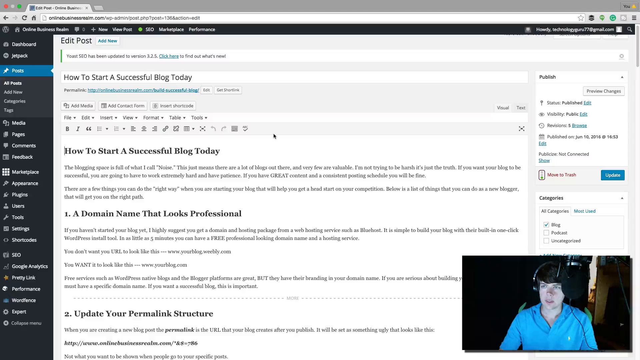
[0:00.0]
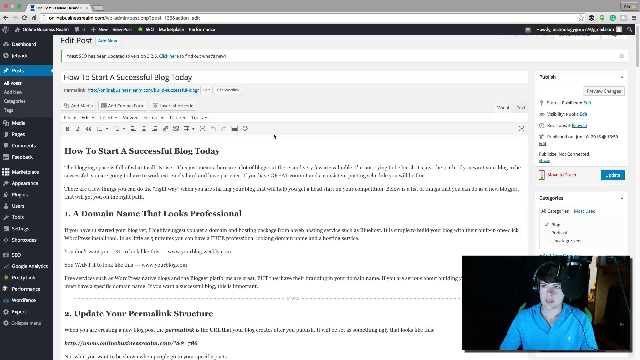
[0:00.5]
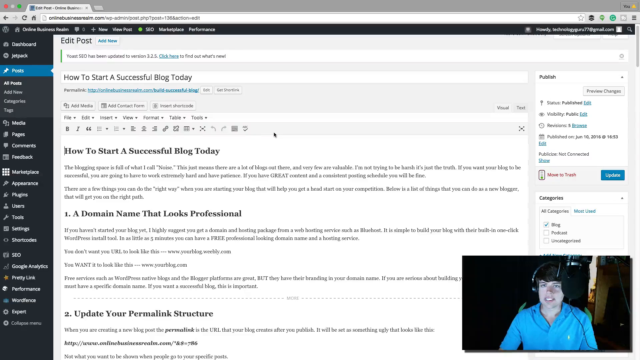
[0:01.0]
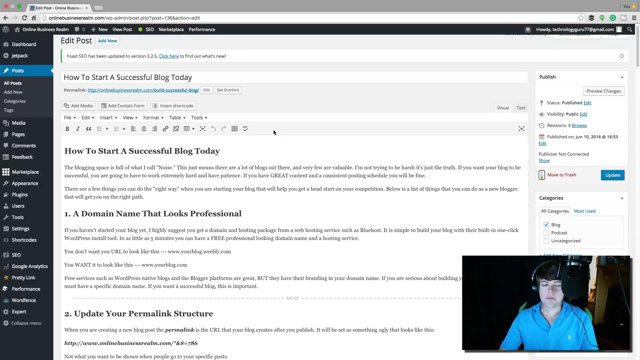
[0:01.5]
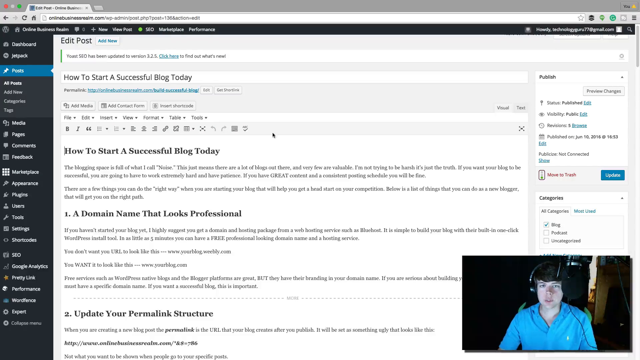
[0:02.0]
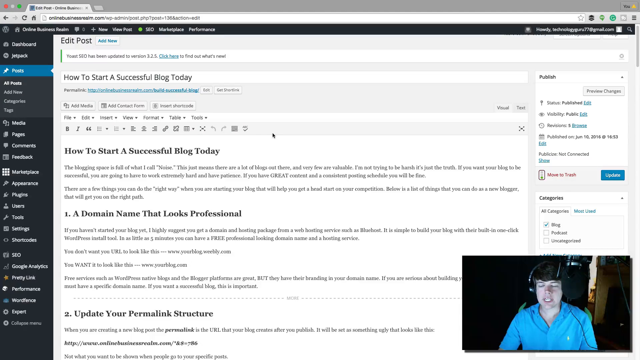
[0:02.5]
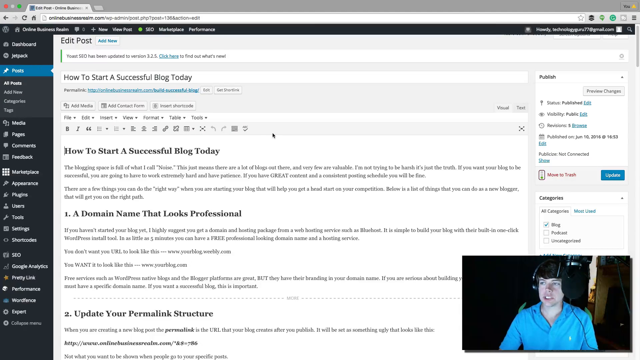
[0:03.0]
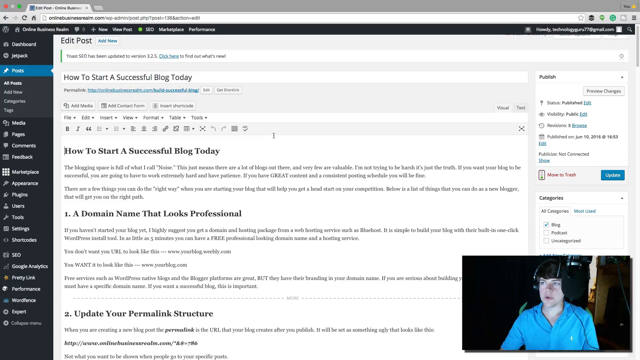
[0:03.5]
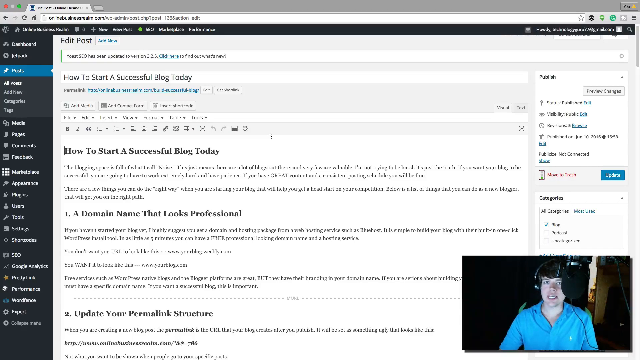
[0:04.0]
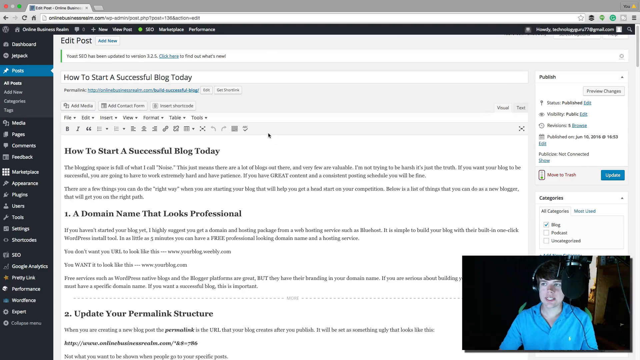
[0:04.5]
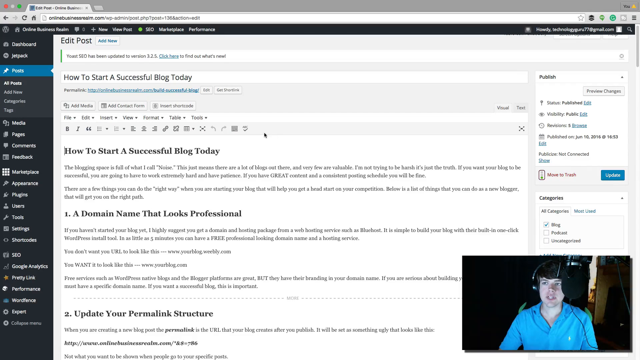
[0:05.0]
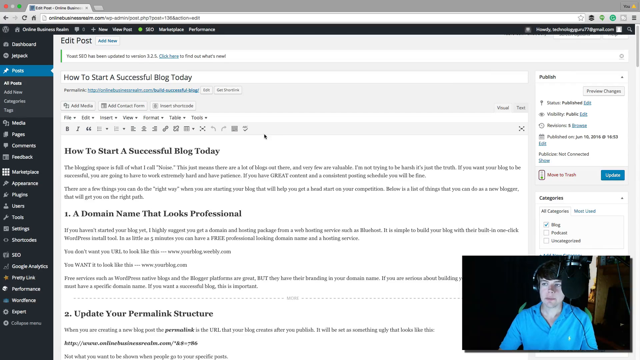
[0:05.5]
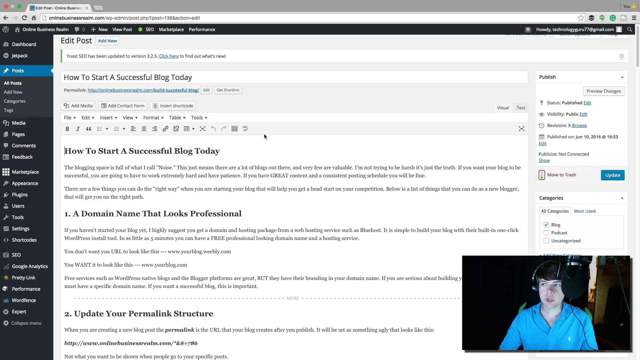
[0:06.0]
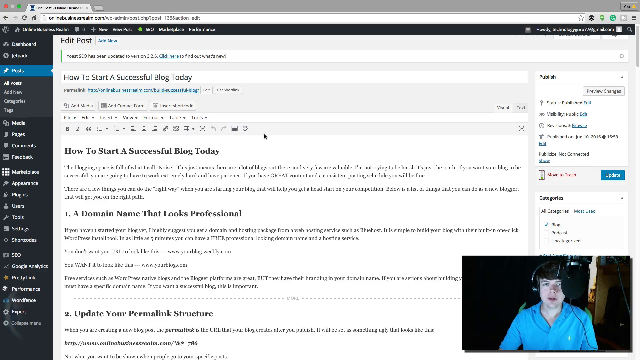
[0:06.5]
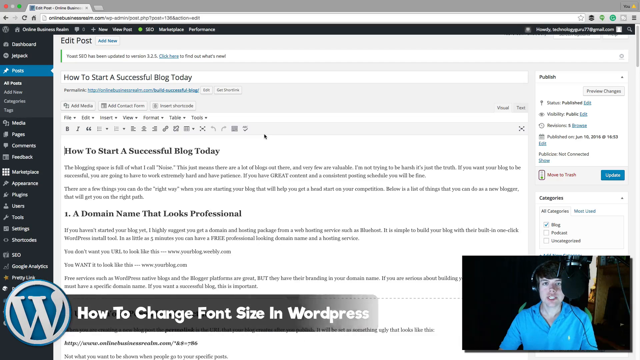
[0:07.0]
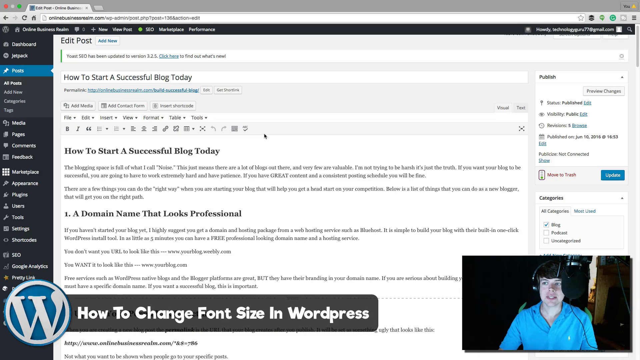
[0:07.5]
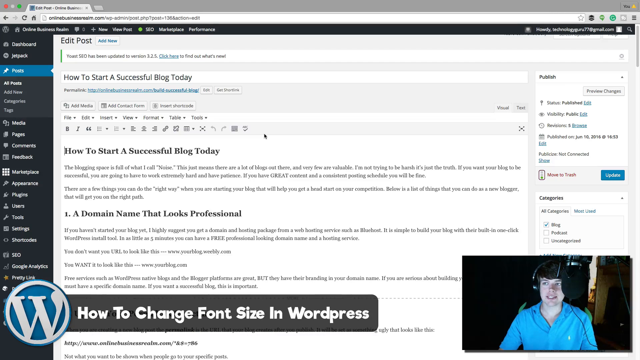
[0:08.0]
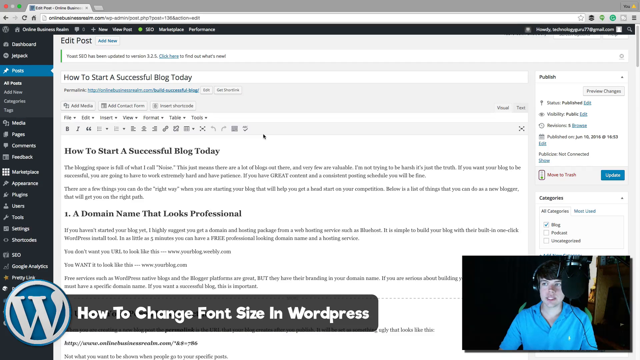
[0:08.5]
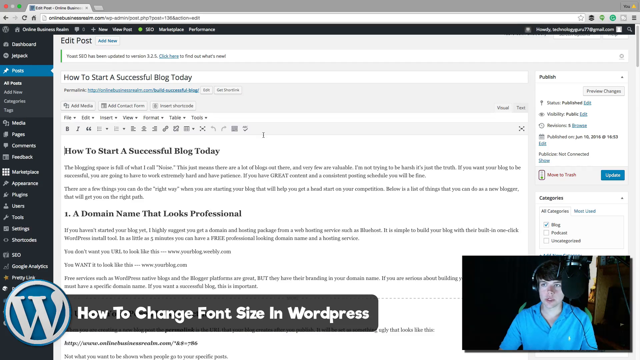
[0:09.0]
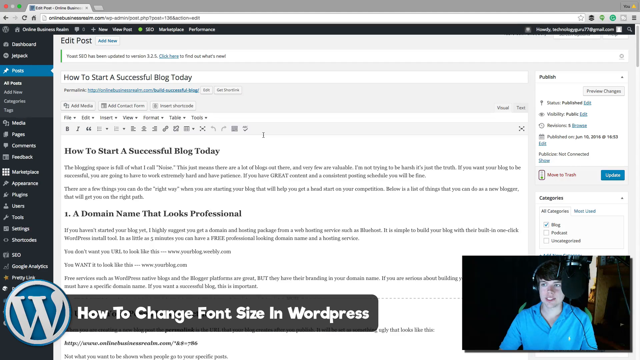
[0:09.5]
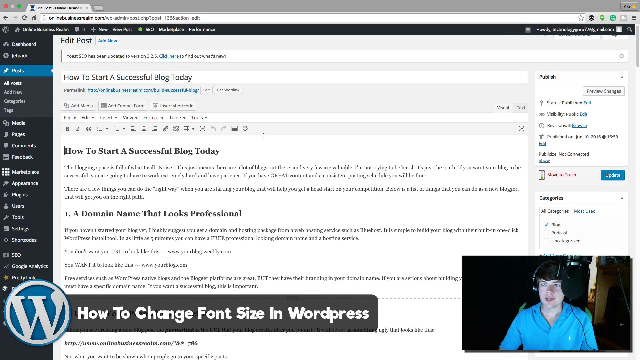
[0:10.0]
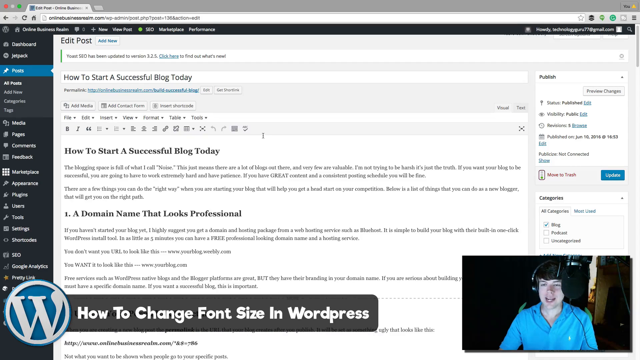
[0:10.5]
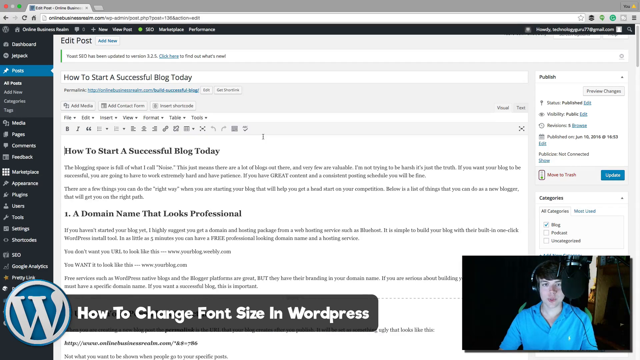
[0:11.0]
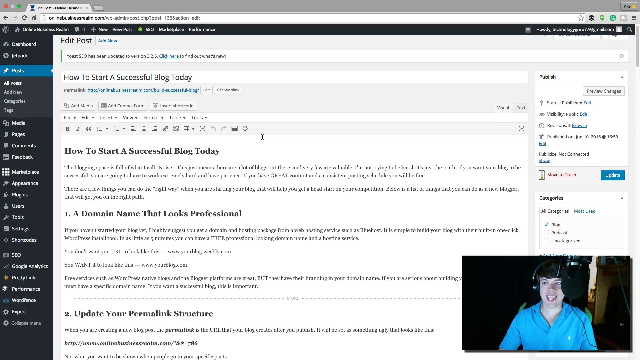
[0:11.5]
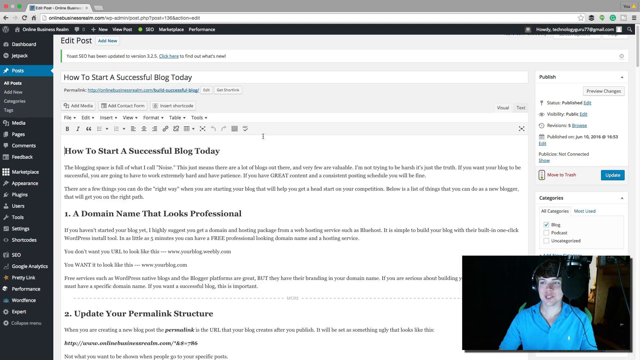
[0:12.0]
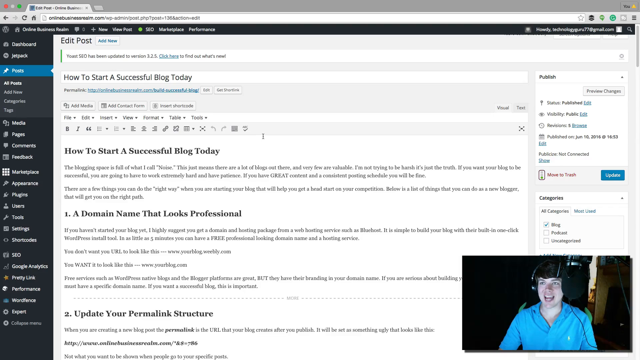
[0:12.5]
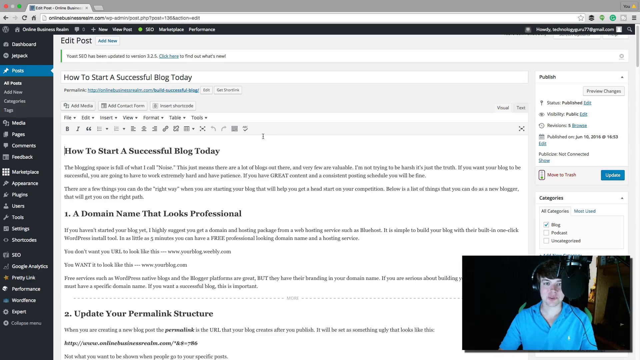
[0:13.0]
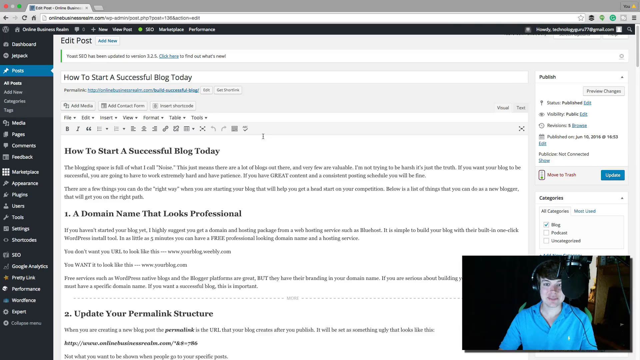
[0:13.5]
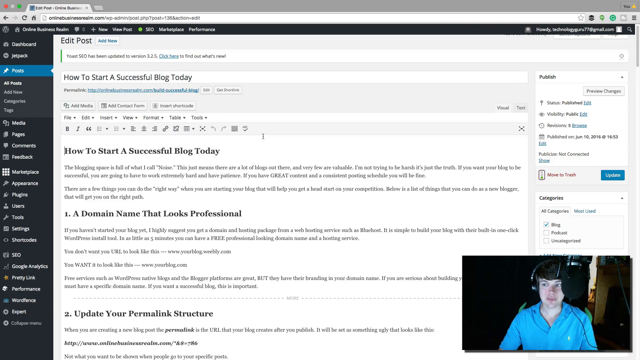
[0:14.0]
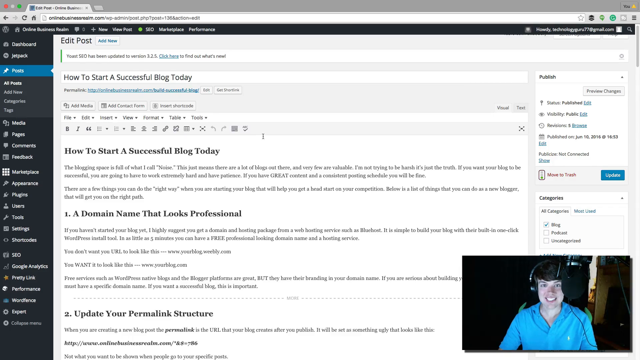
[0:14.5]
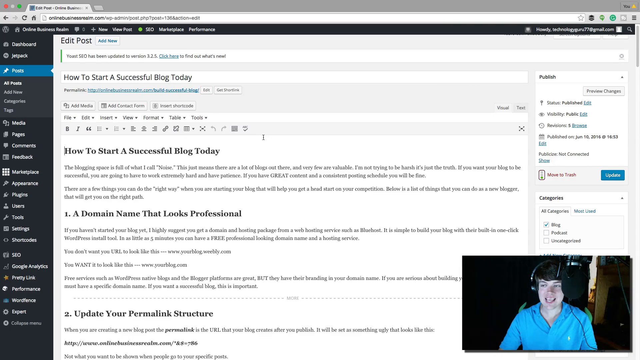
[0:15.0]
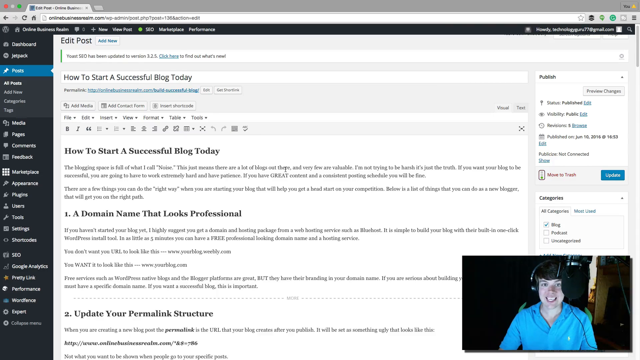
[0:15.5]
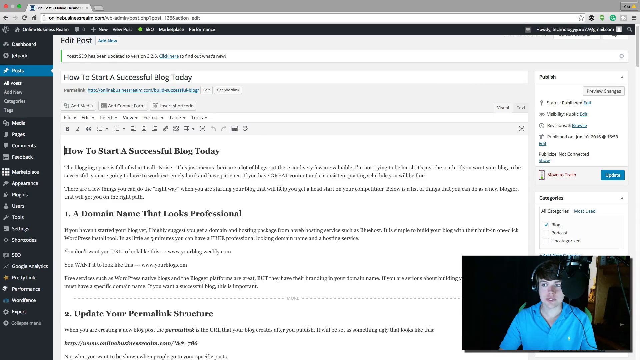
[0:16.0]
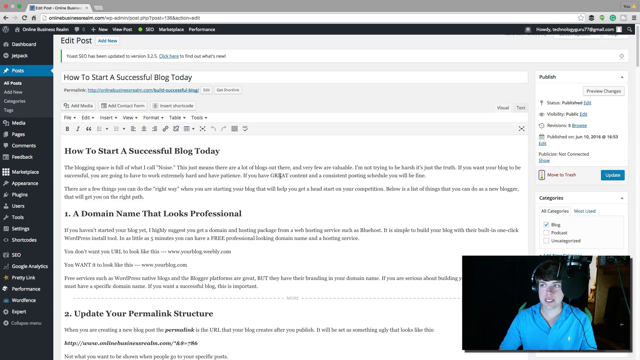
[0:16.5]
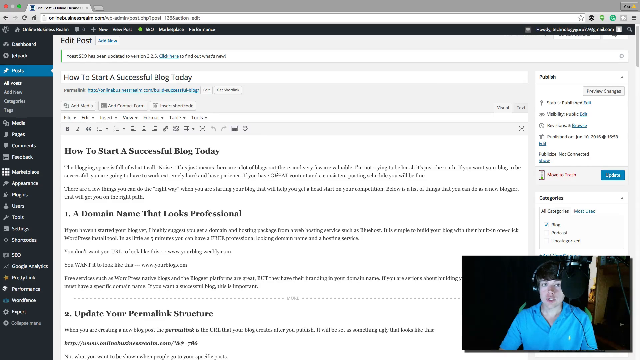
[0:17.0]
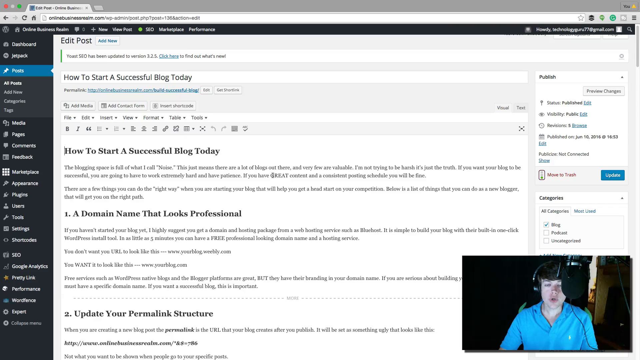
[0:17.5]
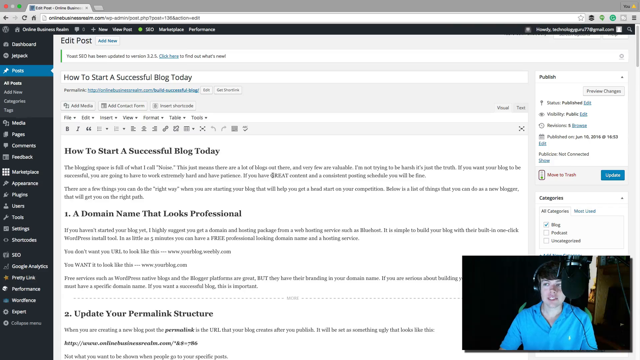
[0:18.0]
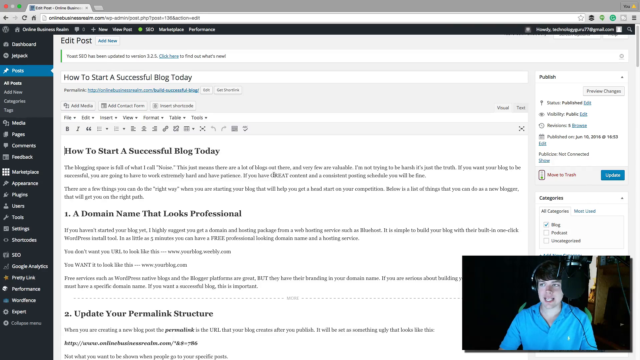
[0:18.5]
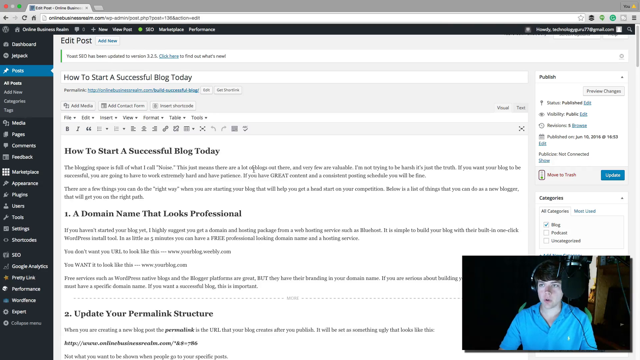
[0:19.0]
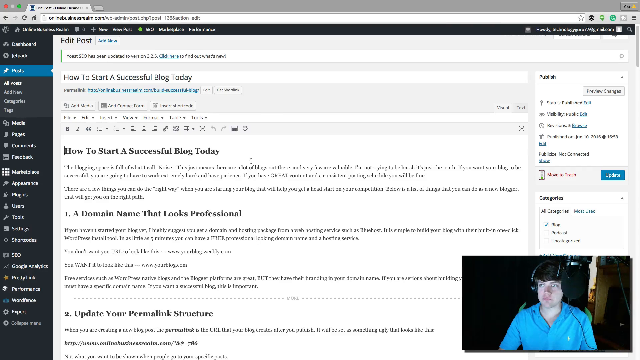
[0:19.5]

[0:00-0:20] The video opens on an edit post page with instructions titled "how to start a successful blog today". The instructions include "a domain name that looks professional" and "update your permanent link structure". In the bottom right-hand corner, a young man is talking, presumably on a podcast and presumably giving directions while he demonstrates the edit post page. He wears a blue shirt and over-the-ear earmuffs, with a drop-down boom mic in front of him. As the video plays, he talks while the mouse kind of bounces around a little on the screen. Across the bottom, a message appears reading "how to change font size in WordPress" alongside a big WordPress symbol. The young man keeps talking and smiling, moving the mouse around in circles on the page, though not much happens on the page itself.